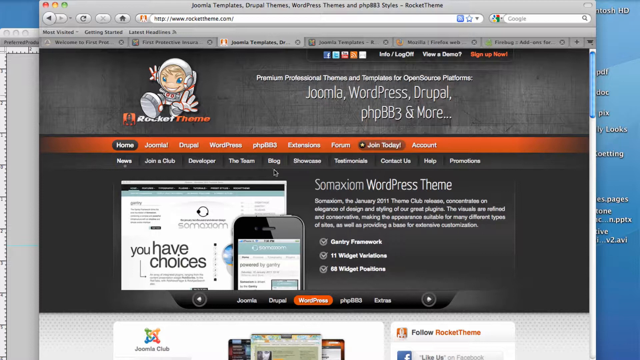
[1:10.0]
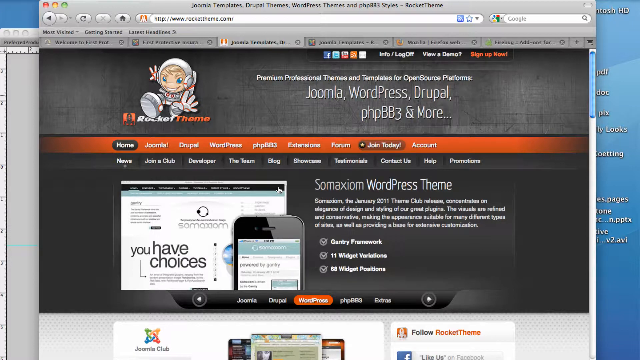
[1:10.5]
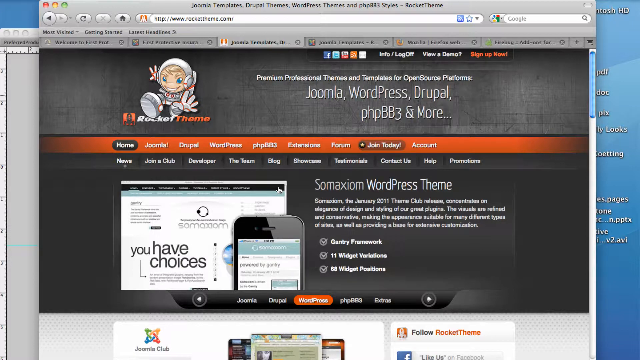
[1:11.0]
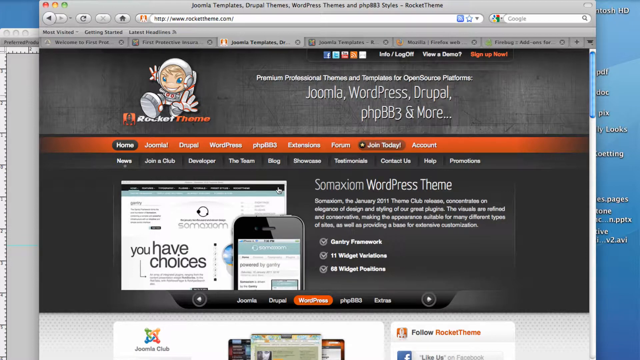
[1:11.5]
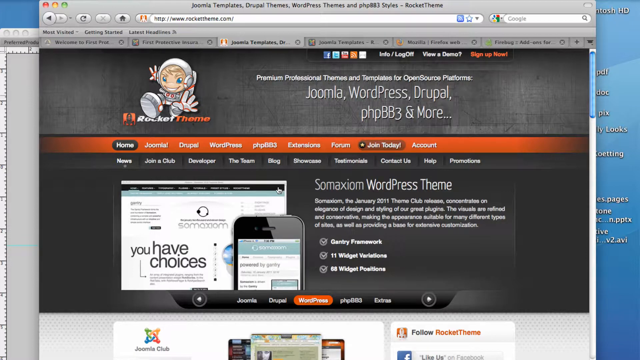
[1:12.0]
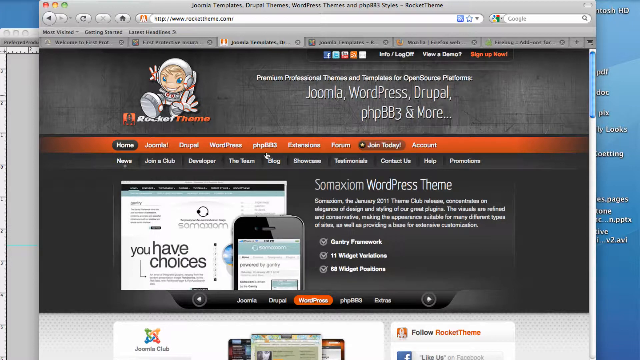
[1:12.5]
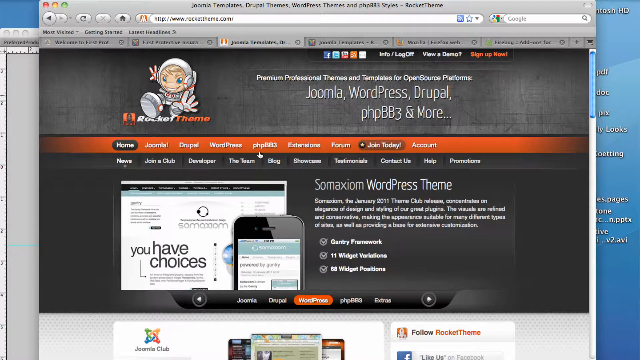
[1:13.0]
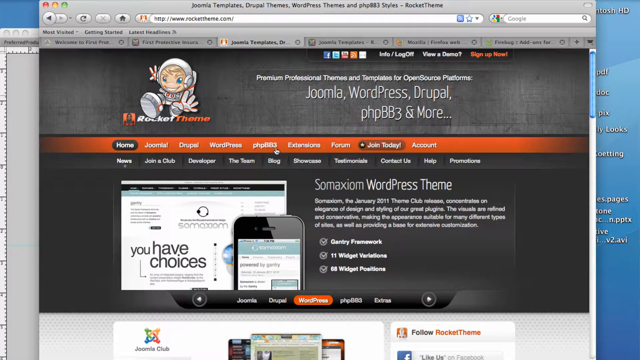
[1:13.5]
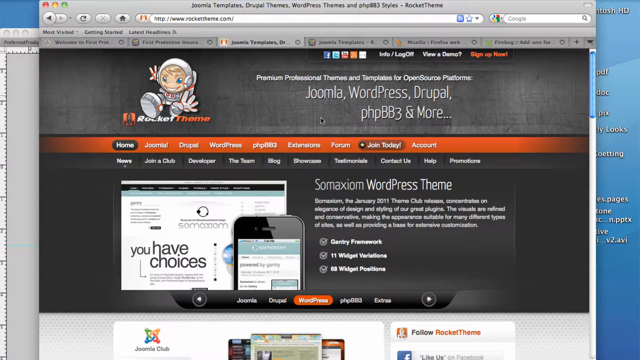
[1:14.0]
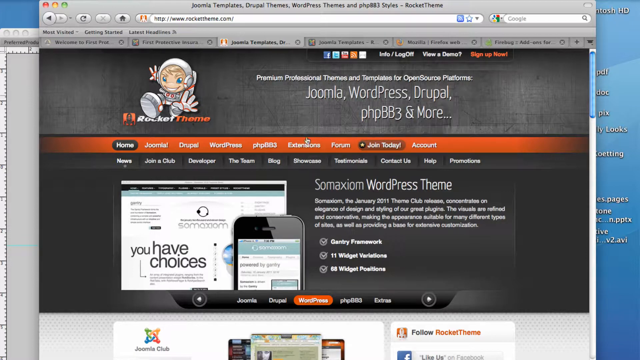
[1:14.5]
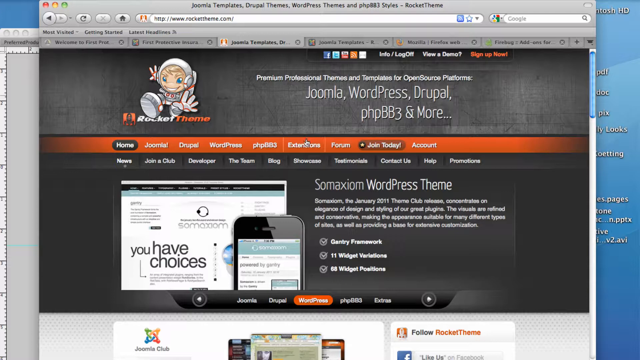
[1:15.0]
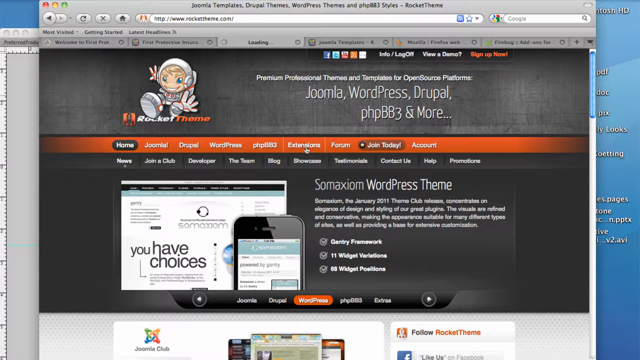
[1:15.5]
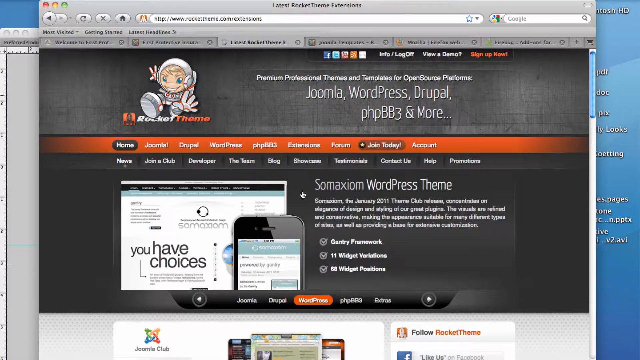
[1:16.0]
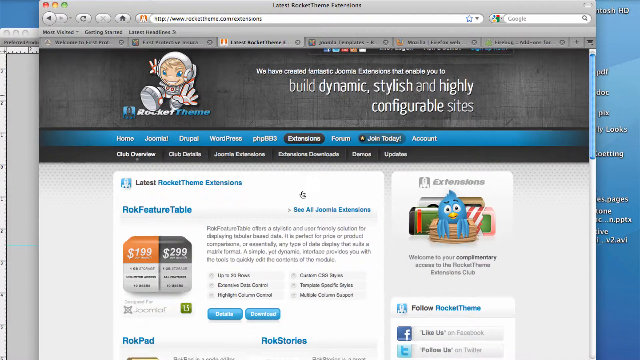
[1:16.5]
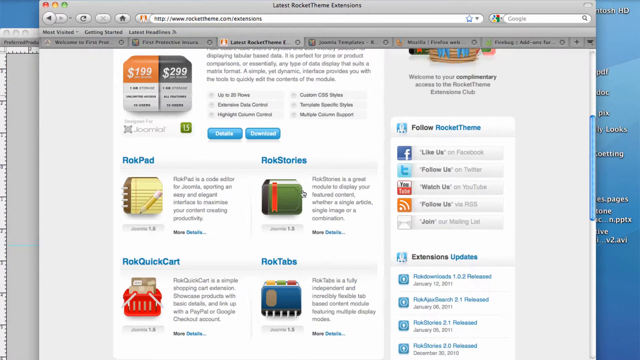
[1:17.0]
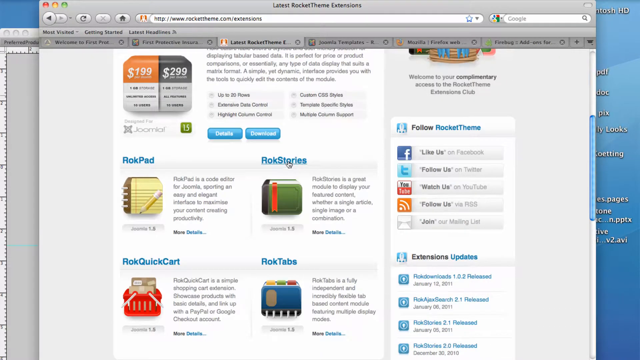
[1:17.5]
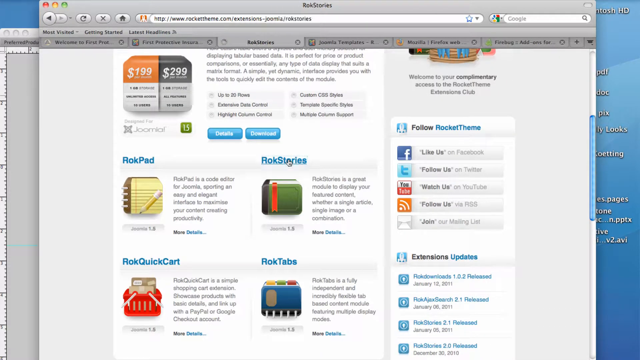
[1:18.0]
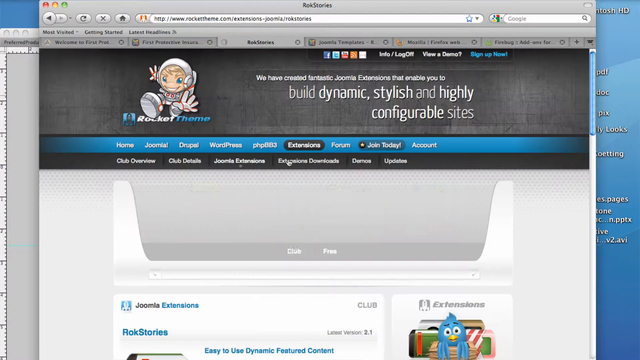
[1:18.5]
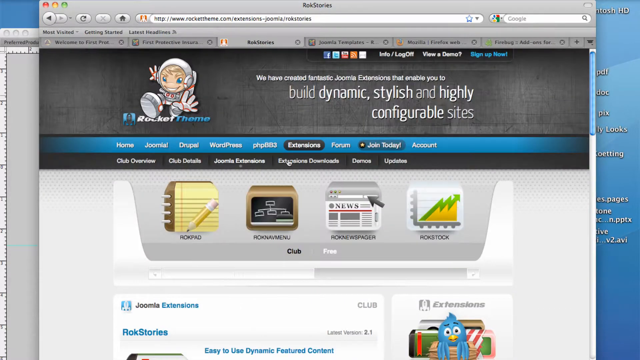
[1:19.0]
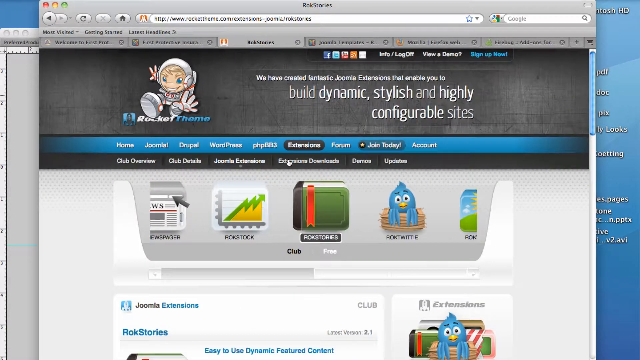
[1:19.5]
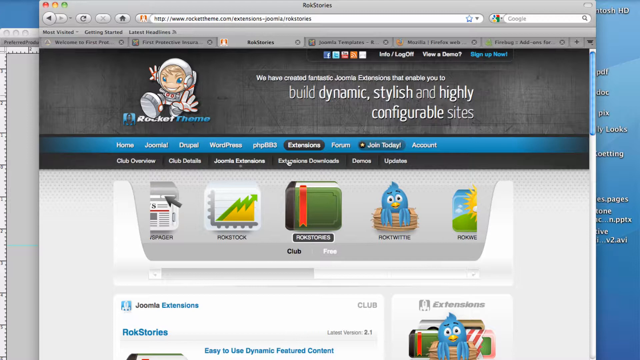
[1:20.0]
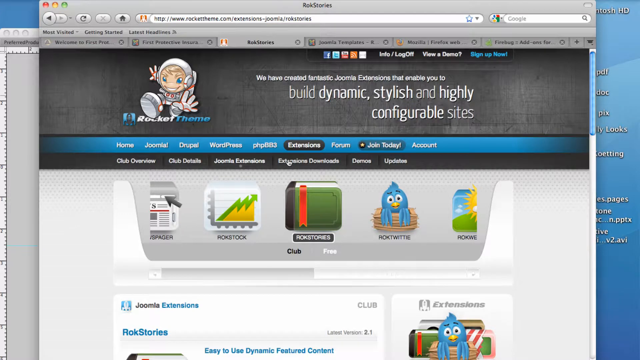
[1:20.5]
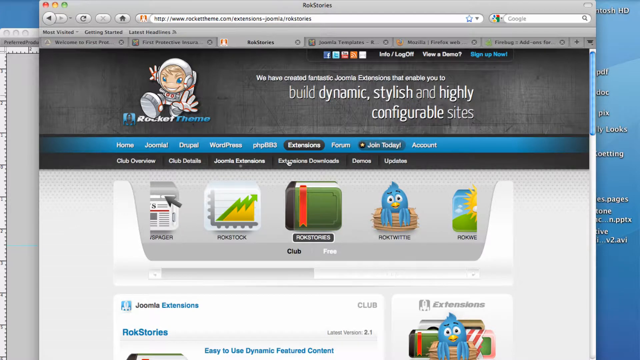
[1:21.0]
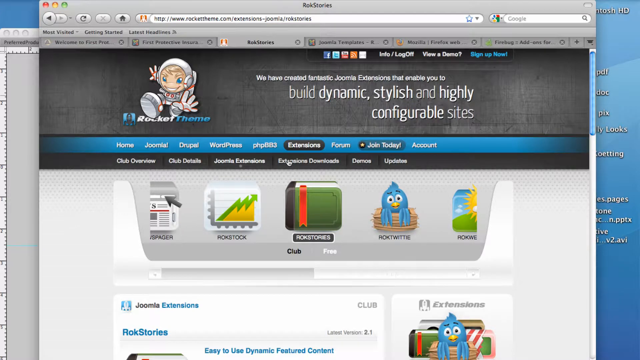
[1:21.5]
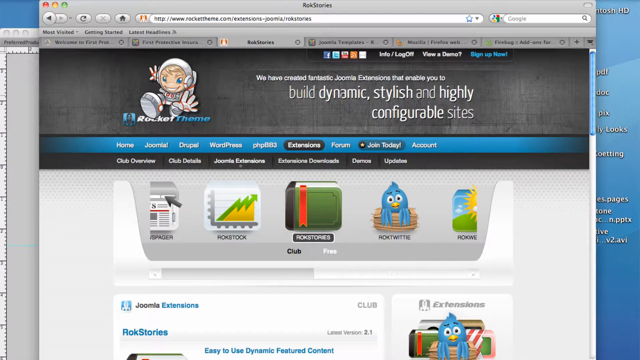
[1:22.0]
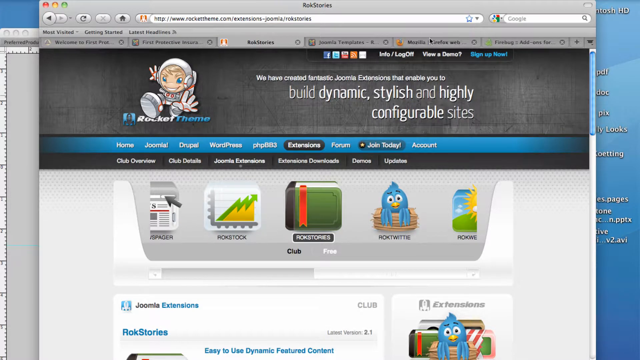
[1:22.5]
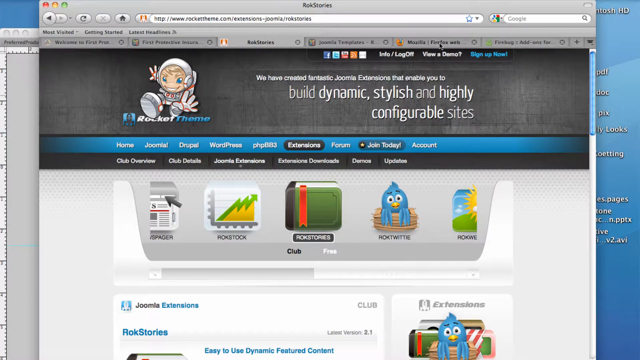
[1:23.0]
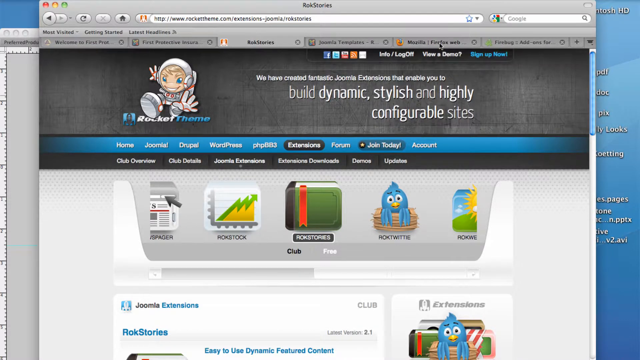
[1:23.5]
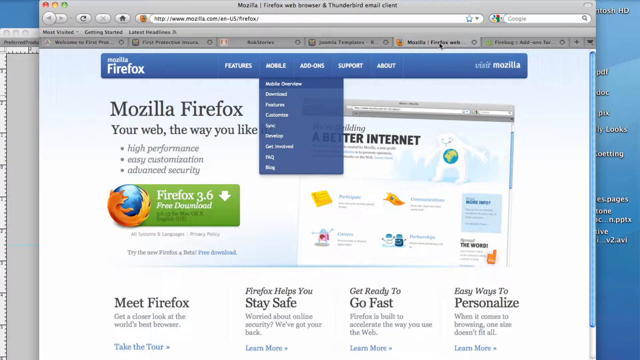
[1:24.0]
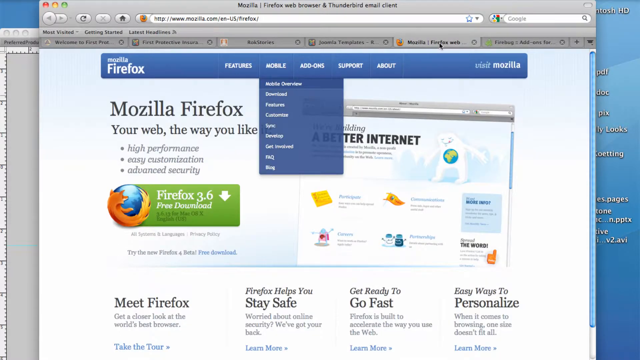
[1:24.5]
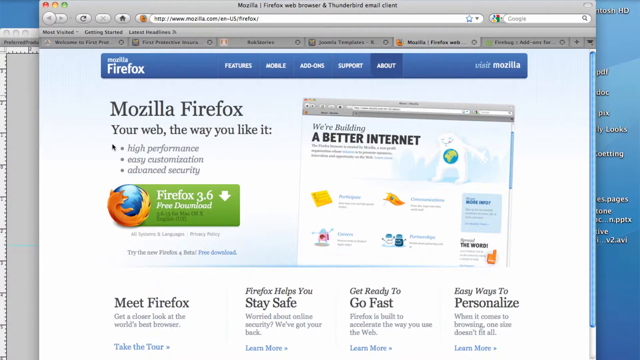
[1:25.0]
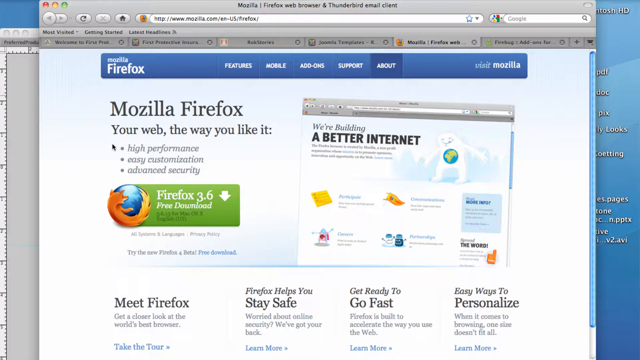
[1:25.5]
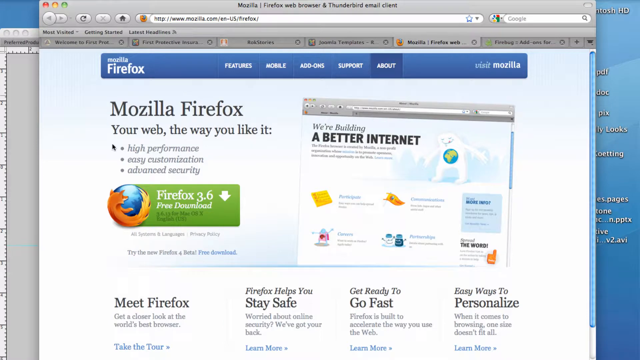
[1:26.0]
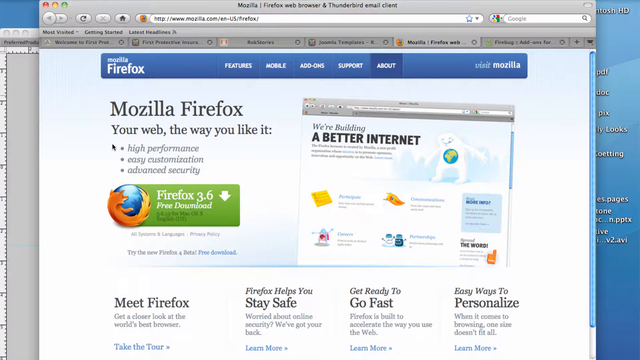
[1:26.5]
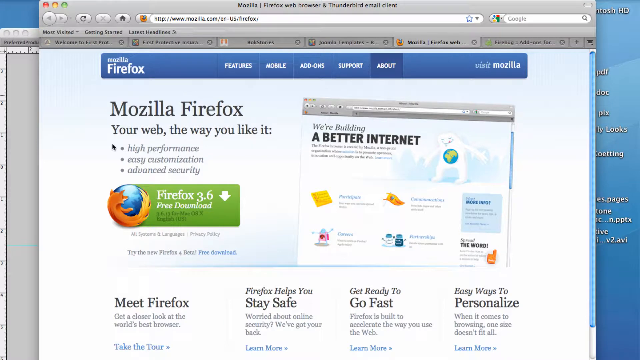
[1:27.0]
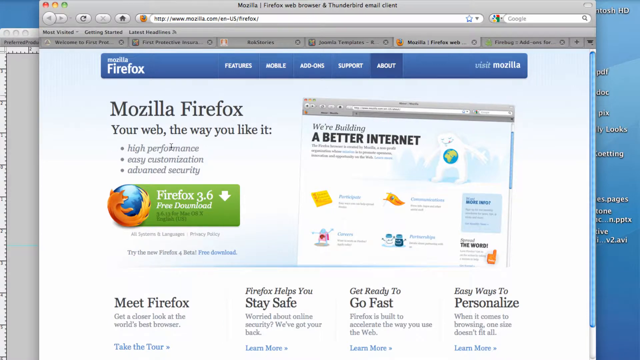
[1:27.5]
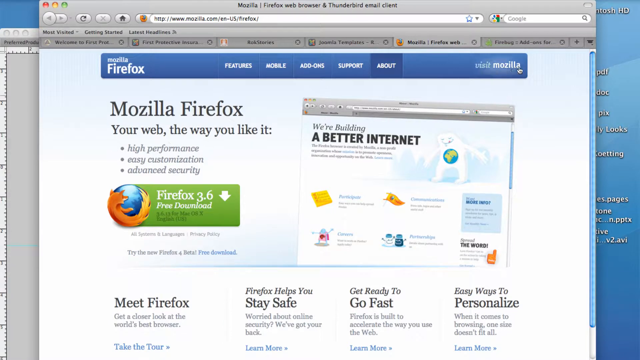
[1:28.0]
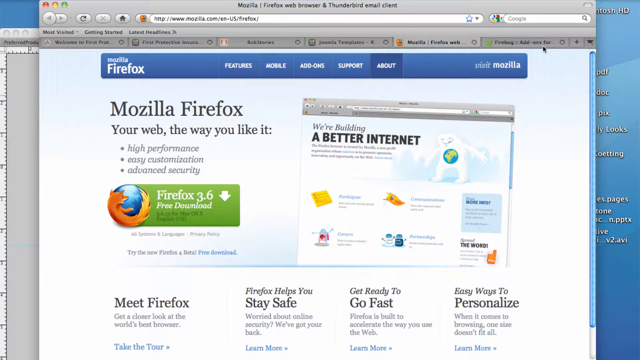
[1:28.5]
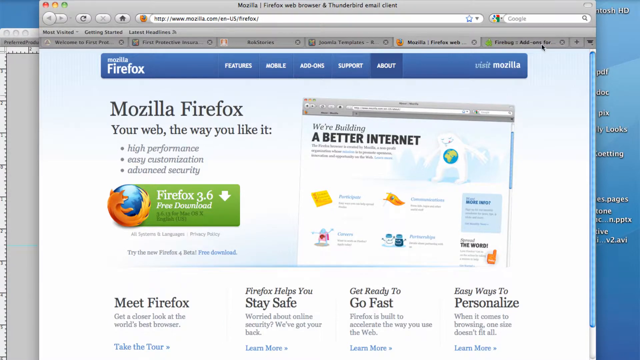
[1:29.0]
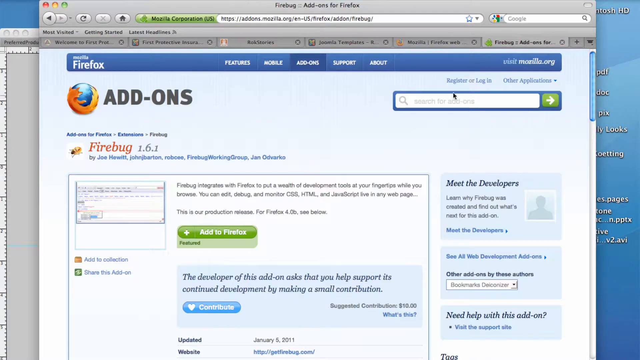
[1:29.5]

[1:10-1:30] The person scrolls down and then back up to the top of the page, where the astronaut and the orange banner are visible. Beneath the orange banner are more tabs: "news," "join a club," "developer," "the team," "blog," "showcase," "testimonials," "contact us," "help" and "promotions." Beneath those is a picture of a window, apparently indicating compatibility with the desktop app, with "you have choices" in its middle. Next to it is a picture of a smartphone showing the same window, apparently indicating availability for smartphone operating systems. Beside that is a paragraph beginning "Symoxium WordPress themes," with the rest of the text too small to read.